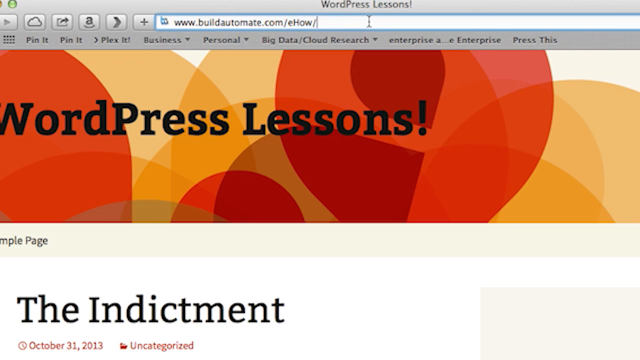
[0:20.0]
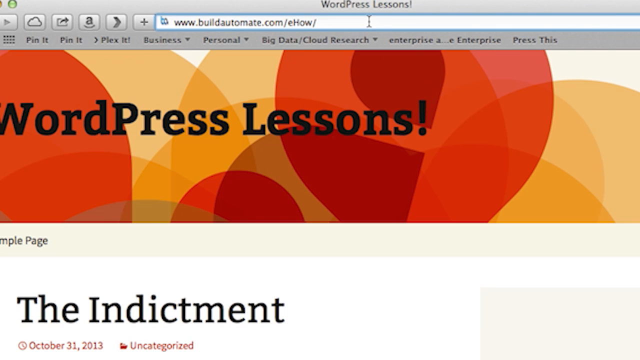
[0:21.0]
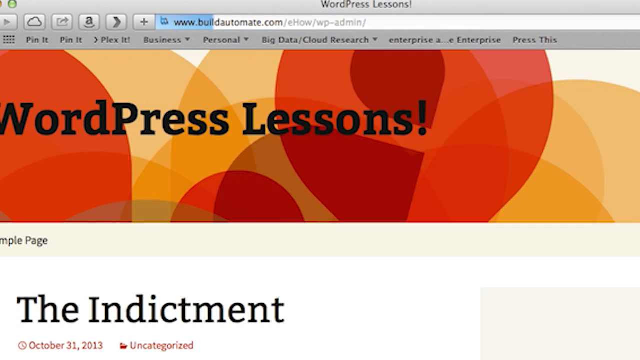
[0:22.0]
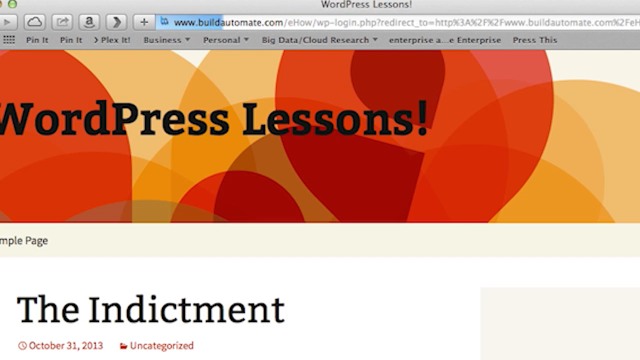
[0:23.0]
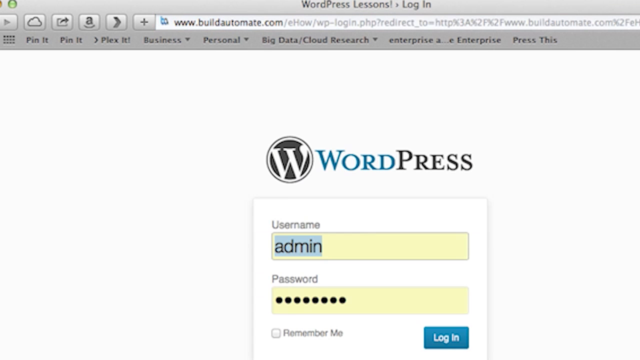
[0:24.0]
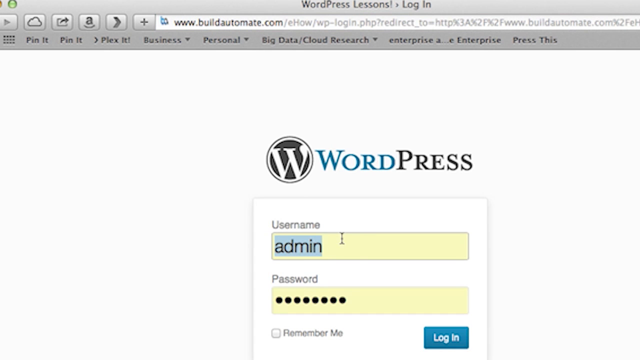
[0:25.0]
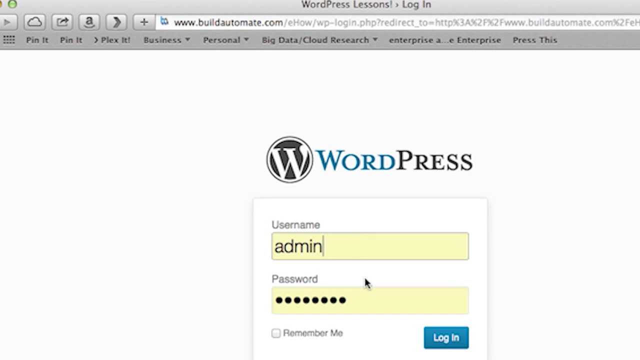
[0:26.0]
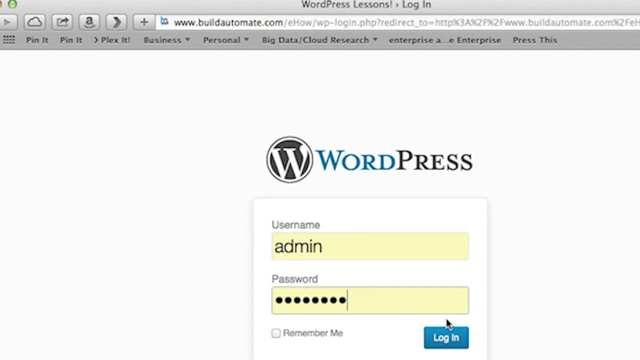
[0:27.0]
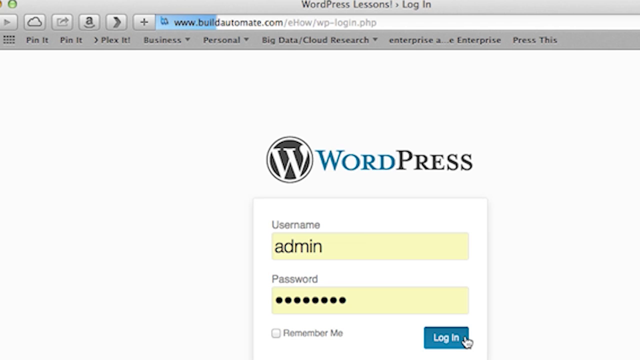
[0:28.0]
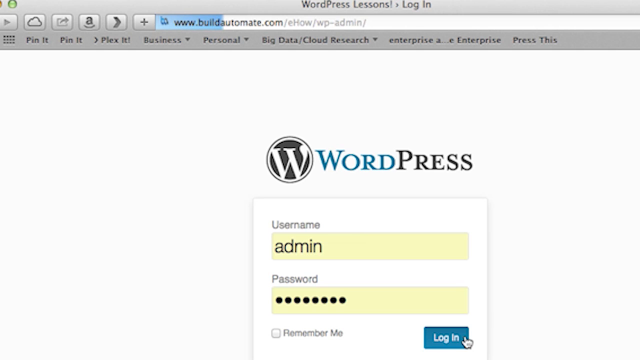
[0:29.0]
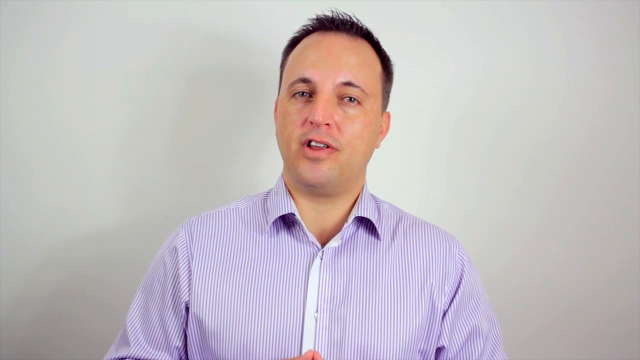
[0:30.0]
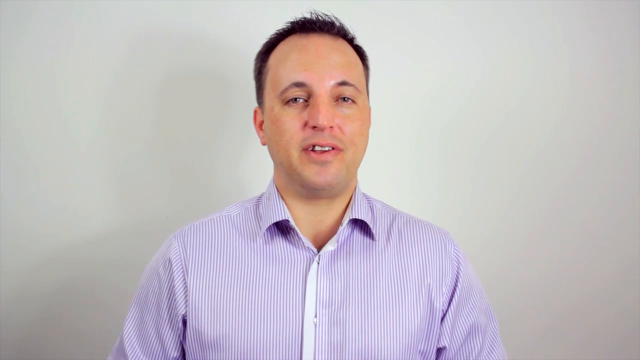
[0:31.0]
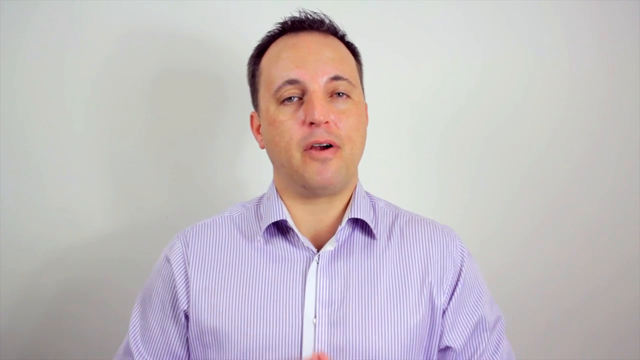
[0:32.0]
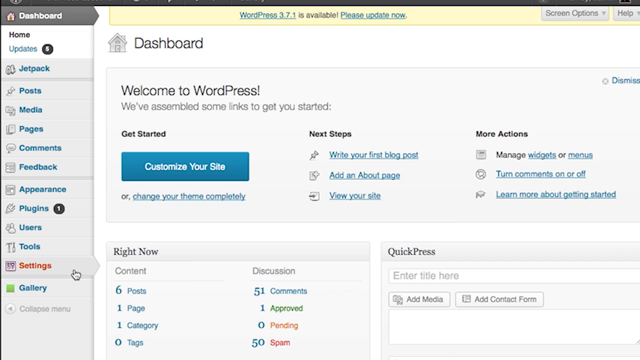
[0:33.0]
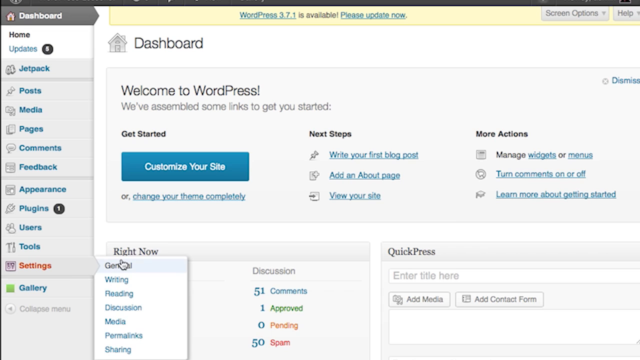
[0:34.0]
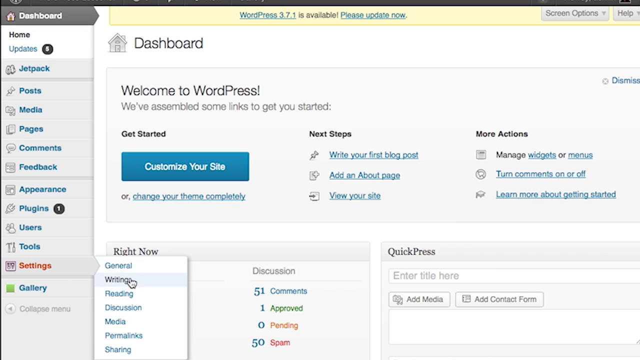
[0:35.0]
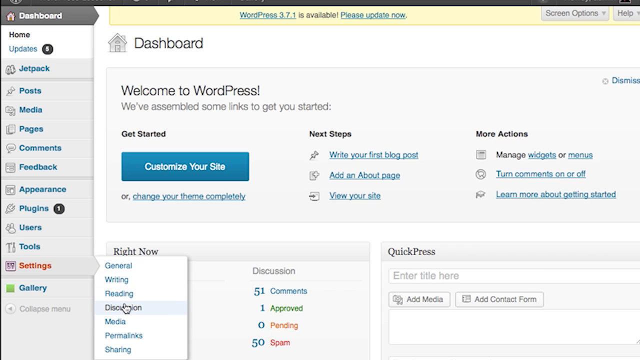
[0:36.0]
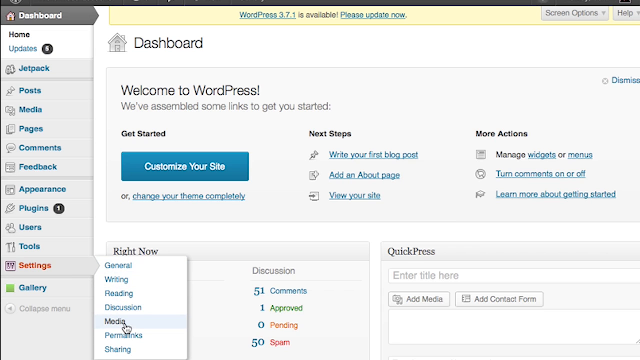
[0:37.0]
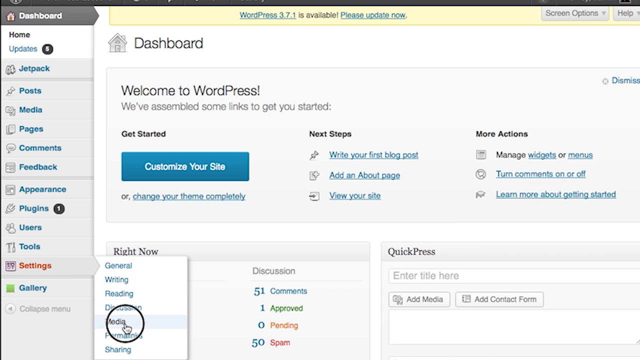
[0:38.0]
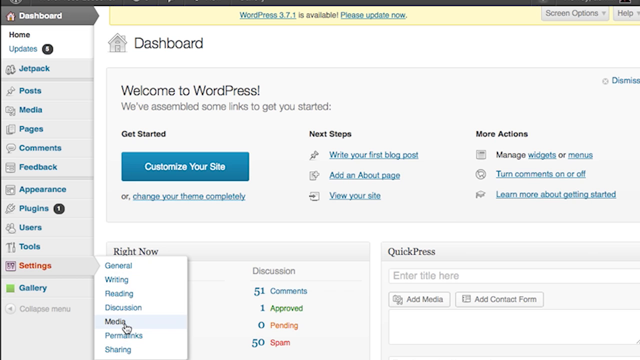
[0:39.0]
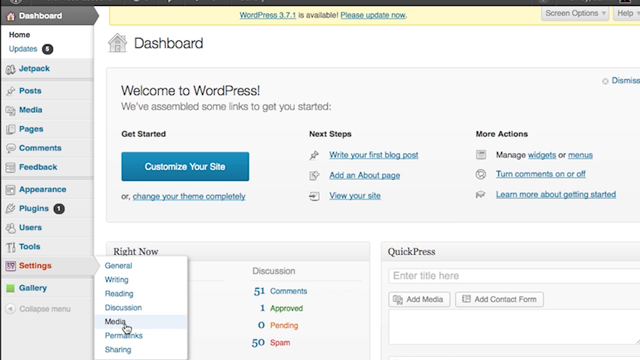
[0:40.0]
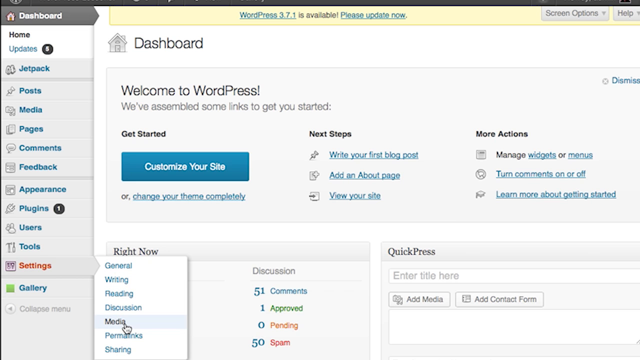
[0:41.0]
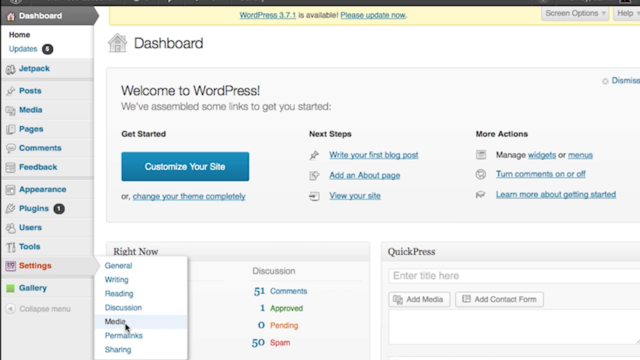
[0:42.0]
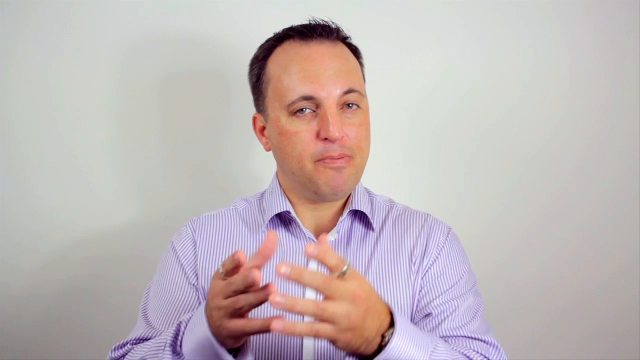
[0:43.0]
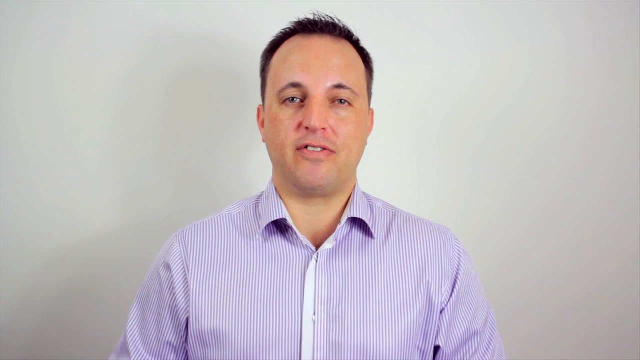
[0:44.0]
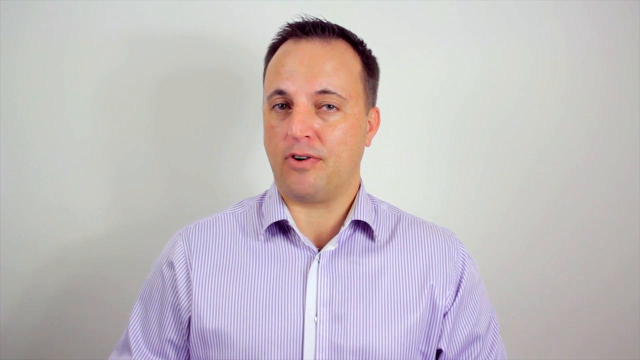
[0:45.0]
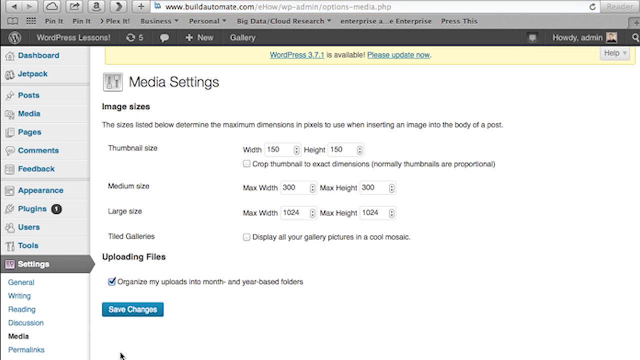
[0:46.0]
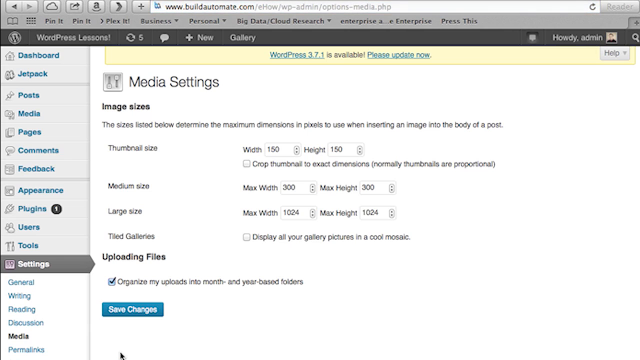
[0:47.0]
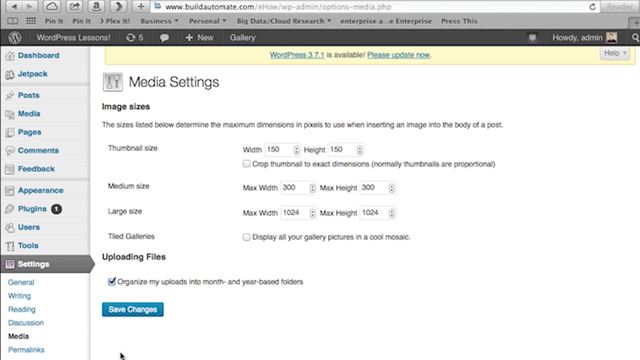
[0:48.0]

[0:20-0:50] The user adds "wp-admin" to the URL in the browser's address bar and presses enter. A blue loading progress bar appears inside the address bar, and the WordPress page loads with username and password fields that are auto-filled, both with yellow backgrounds. The user clicks the login button. The video cuts back to the man talking, who looks quite happy, then to the WordPress dashboard, where the user hovers over the settings button in the left-hand navigation and clicks a button that says "media", which is highlighted with a small black circle. Another shot shows the man speaking with both palms together, his hands slightly raised before moving back down below the screen area. Next is the WordPress media settings page, which reads "media settings" and "image sizes" and shows various options for configuring thumbnail sizes and file uploads.